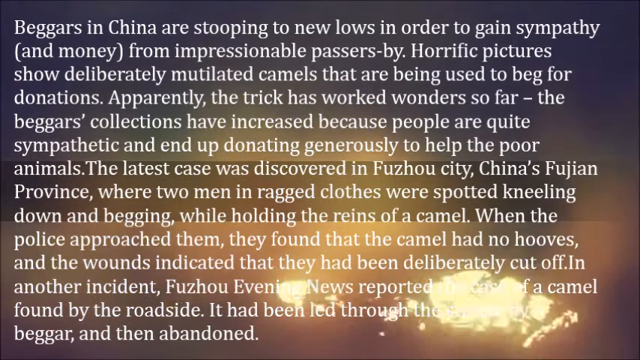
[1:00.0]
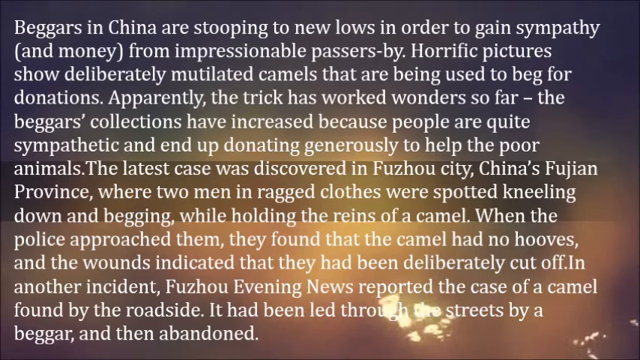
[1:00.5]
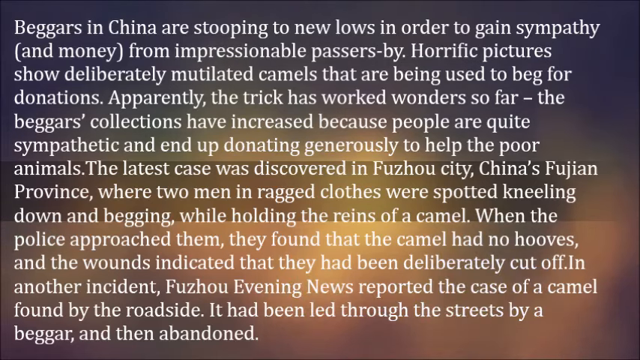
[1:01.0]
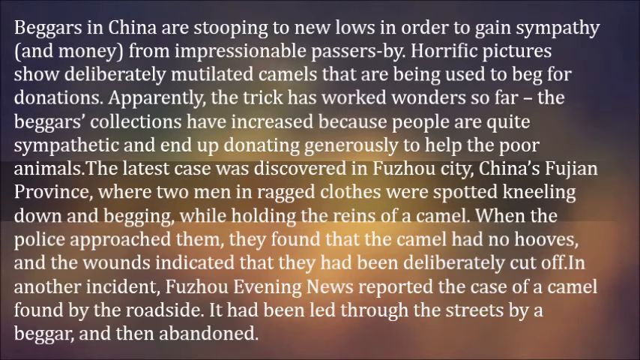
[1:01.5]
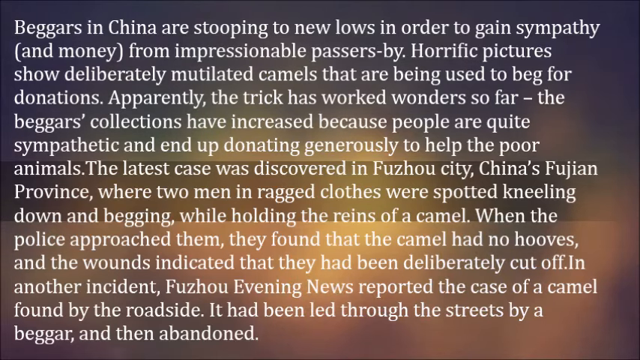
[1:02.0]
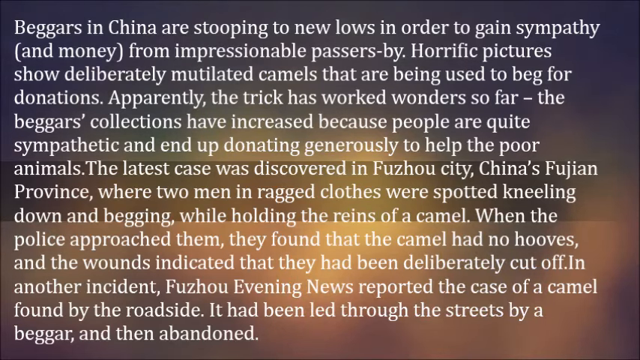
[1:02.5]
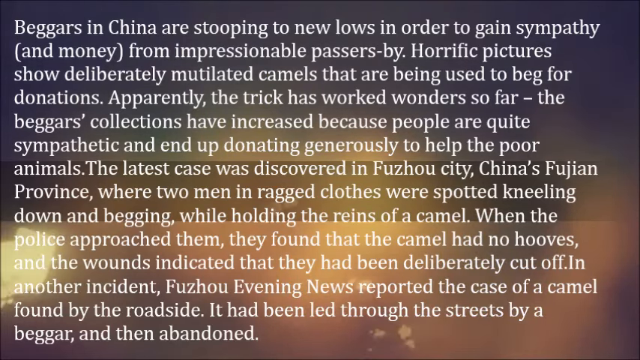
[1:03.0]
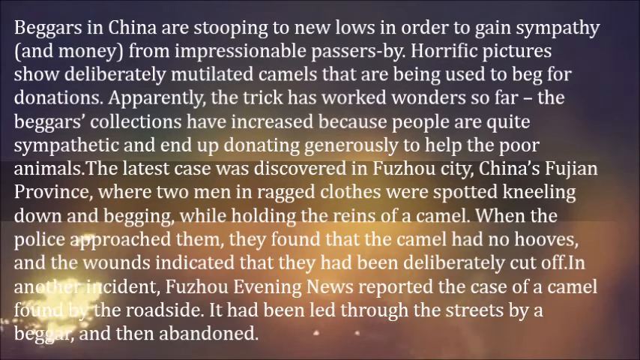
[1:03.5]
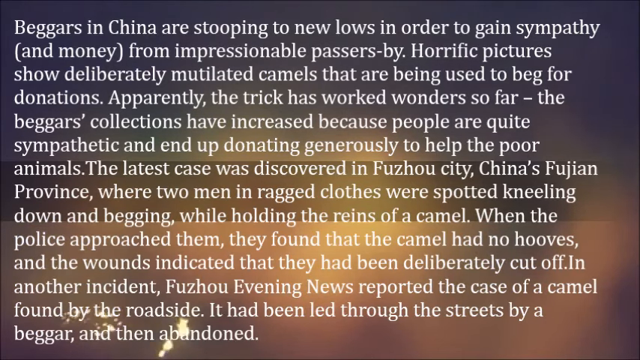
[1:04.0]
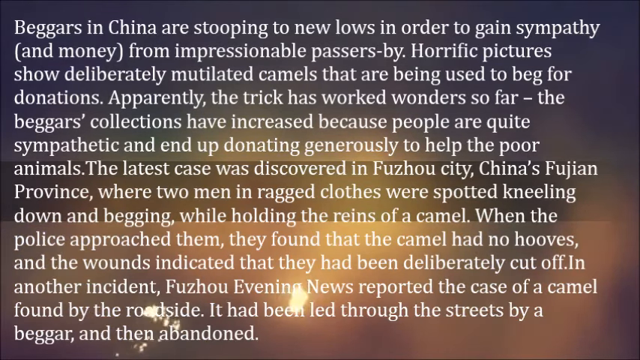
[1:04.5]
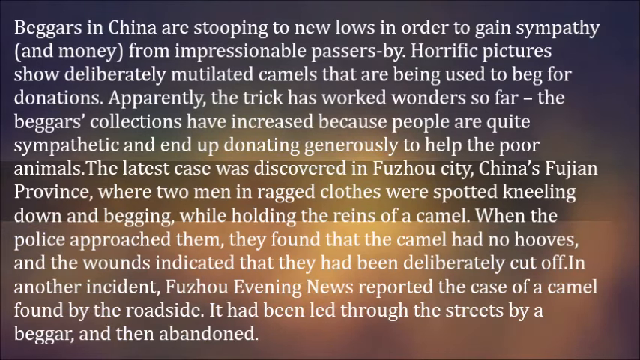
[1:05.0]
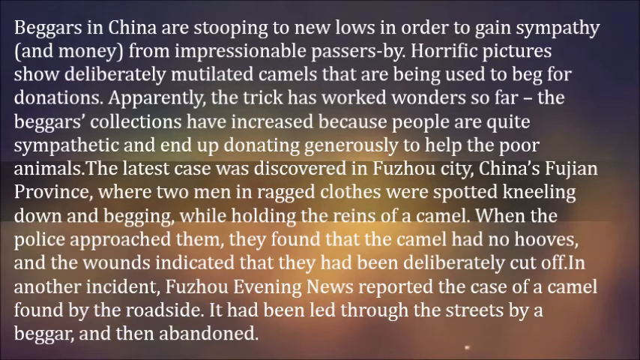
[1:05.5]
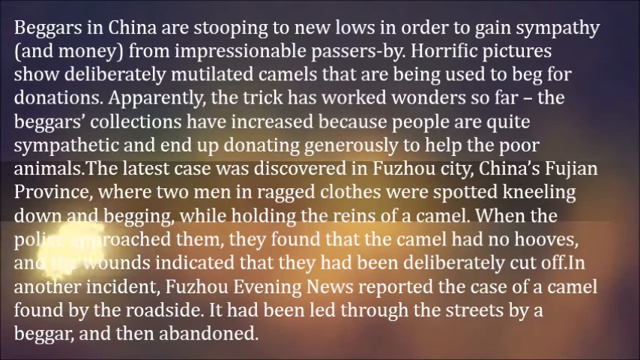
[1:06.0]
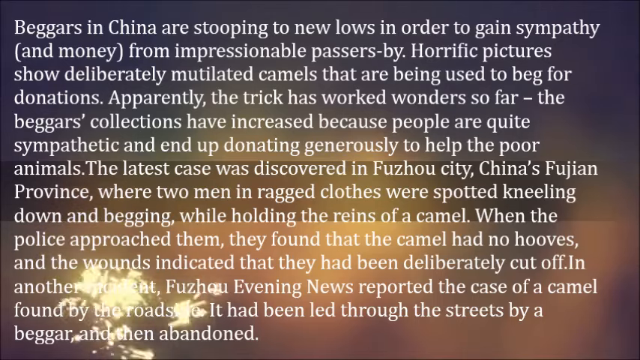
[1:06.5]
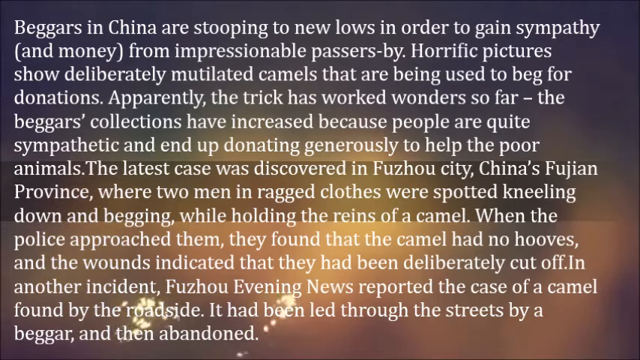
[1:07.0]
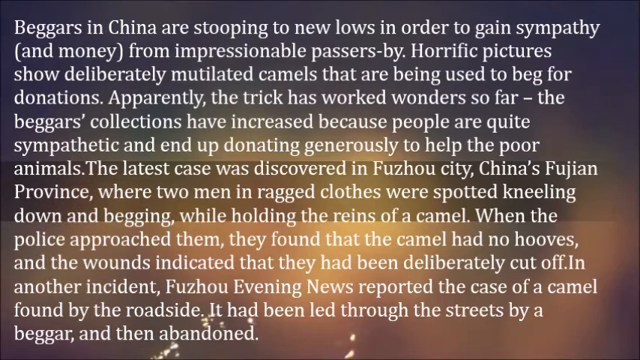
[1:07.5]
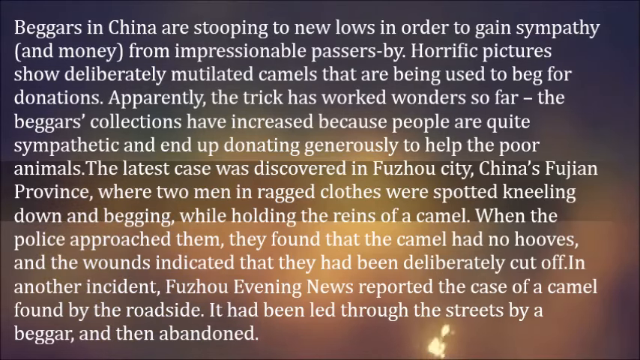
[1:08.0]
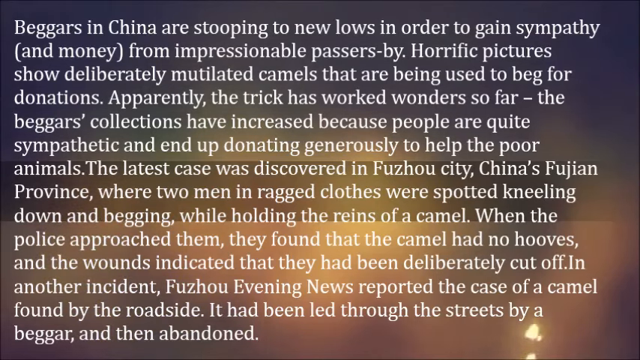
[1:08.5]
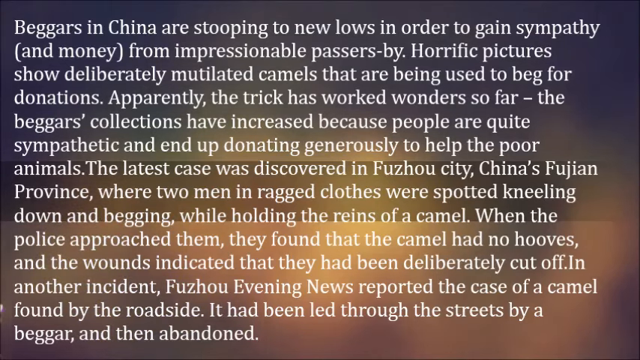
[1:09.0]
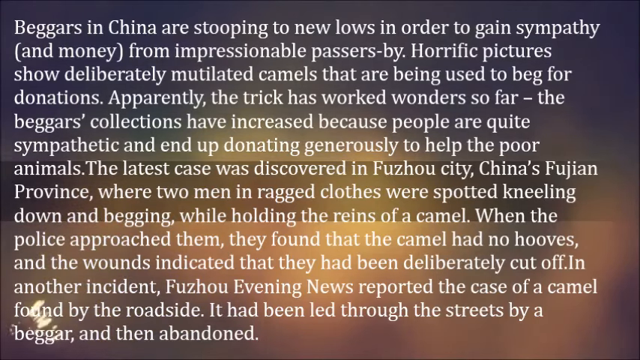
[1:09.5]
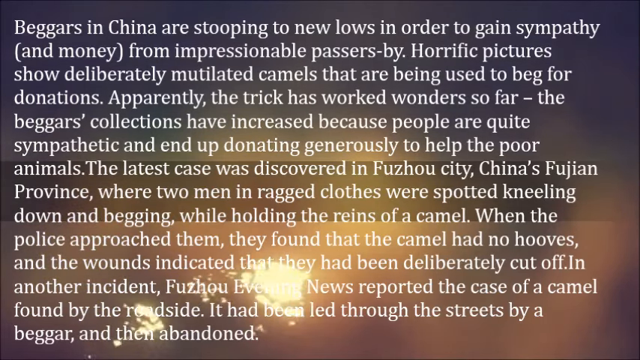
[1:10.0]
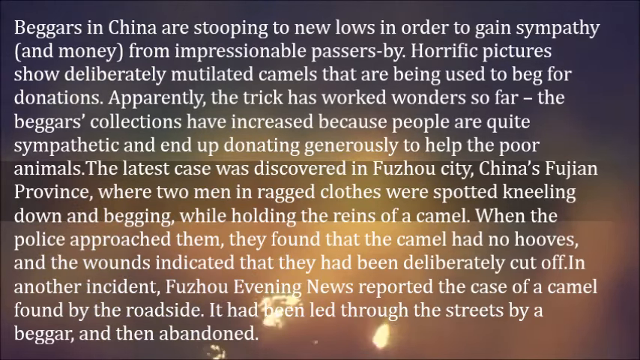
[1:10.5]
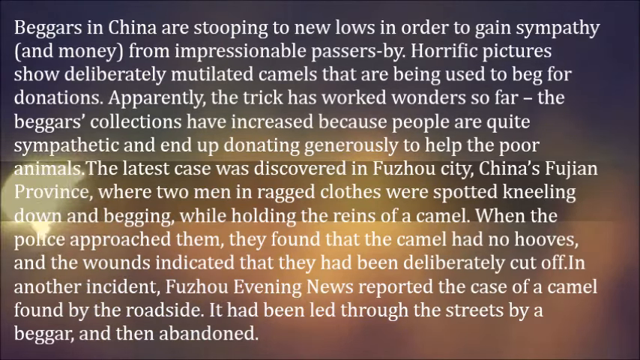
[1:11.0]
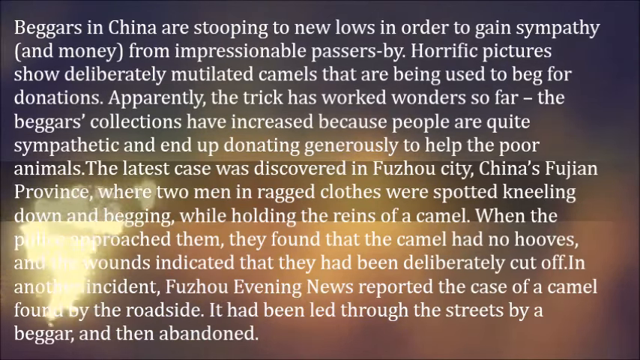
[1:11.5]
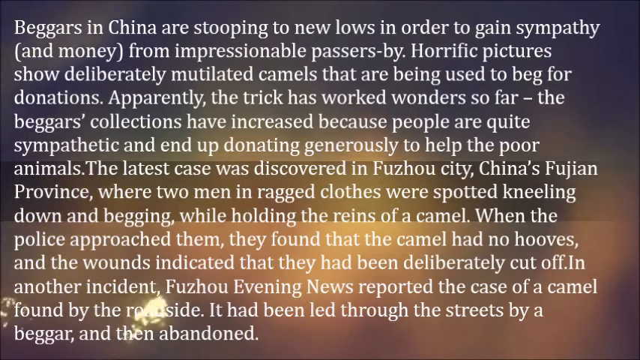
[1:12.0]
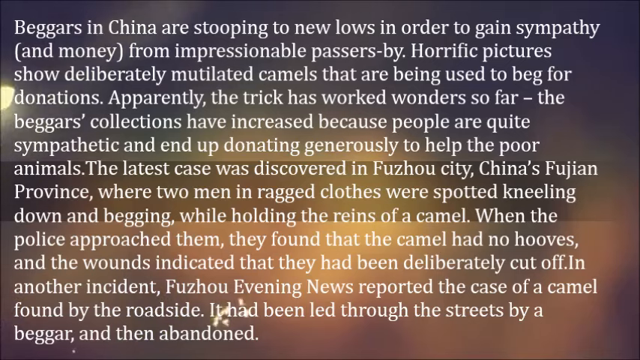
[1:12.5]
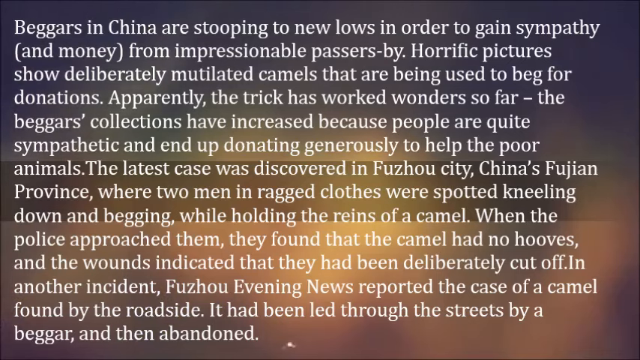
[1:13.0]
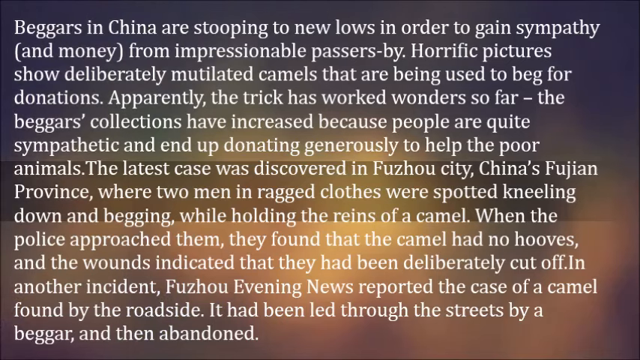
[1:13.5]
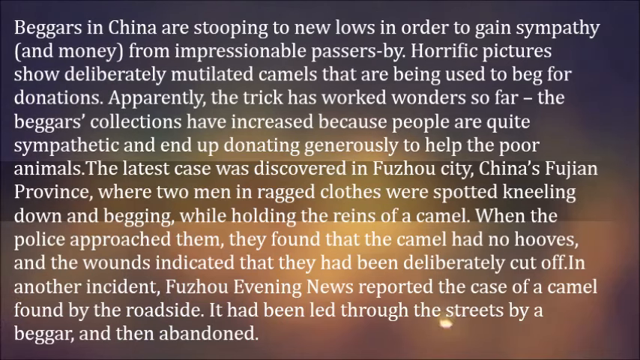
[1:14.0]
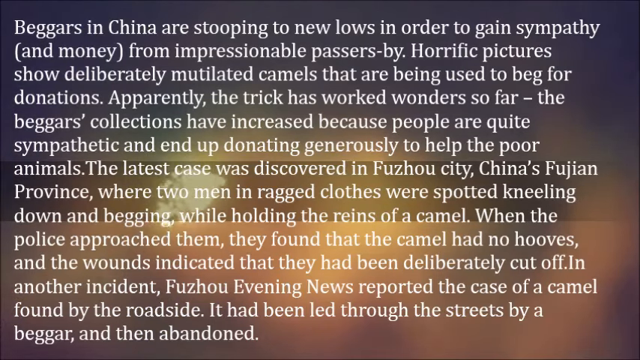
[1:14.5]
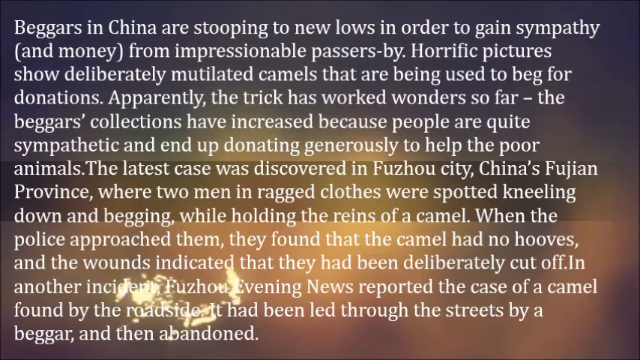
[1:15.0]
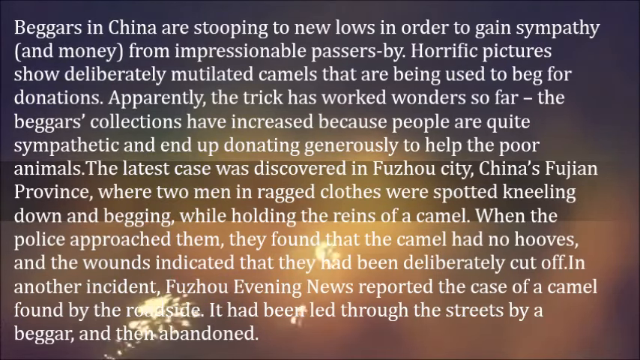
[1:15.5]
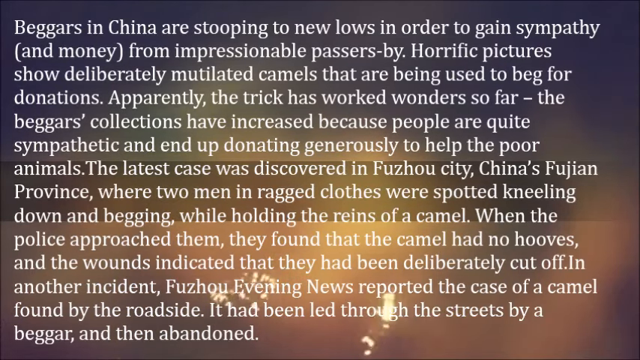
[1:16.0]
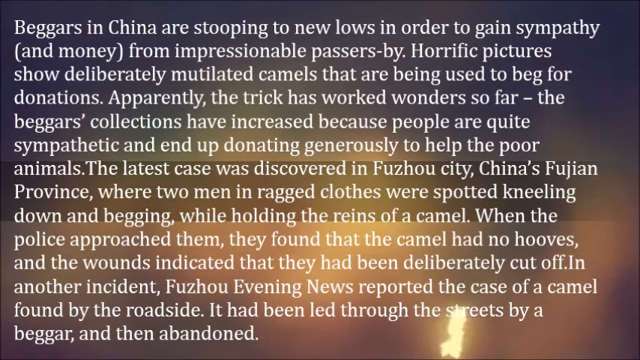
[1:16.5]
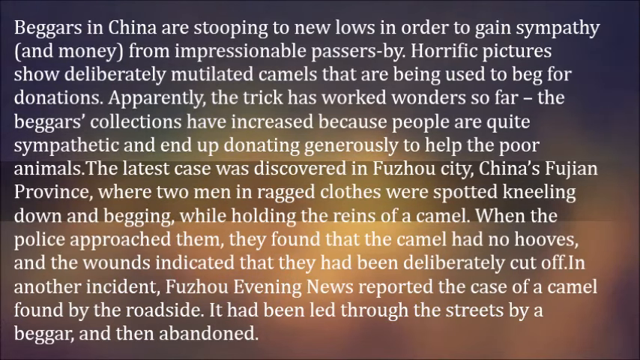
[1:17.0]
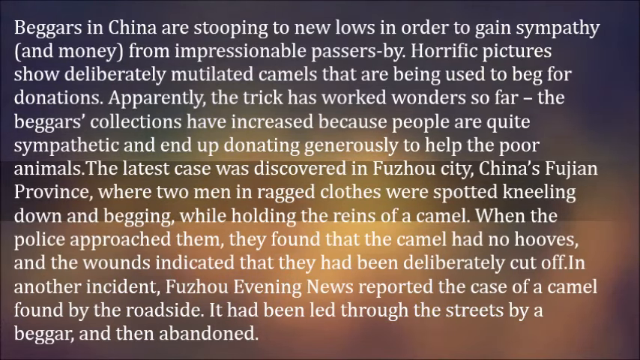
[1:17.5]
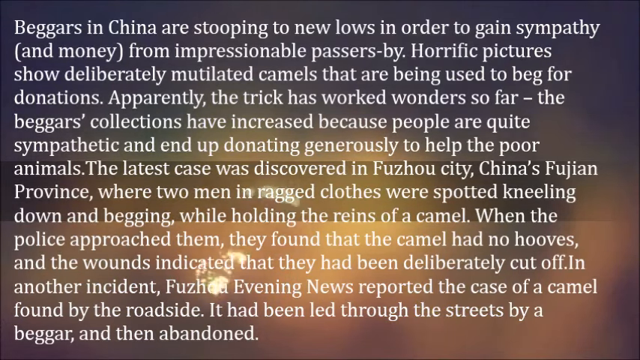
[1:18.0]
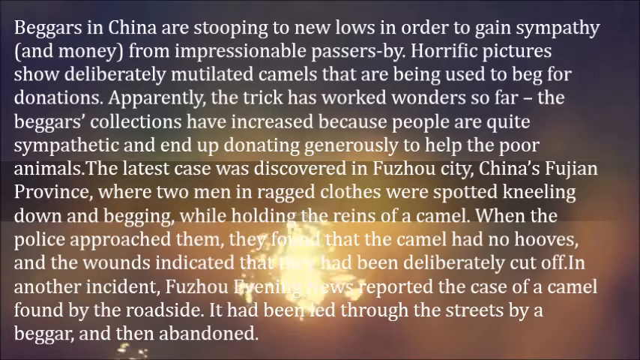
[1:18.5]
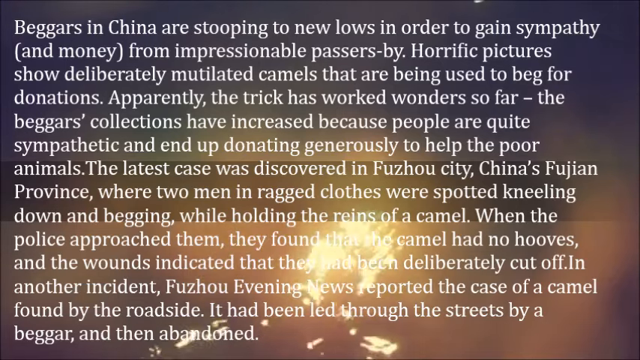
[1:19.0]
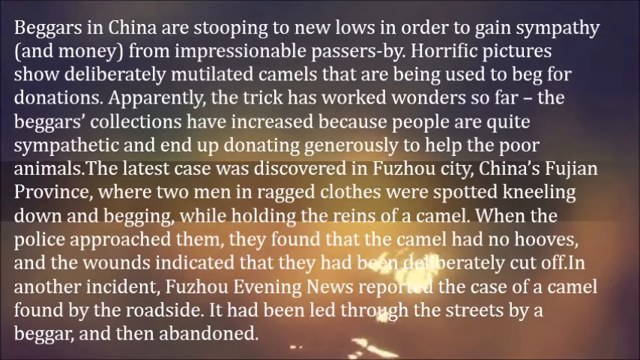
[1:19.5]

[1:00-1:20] The words remain on the screen for the whole segment, describing beggars in China who deliberately injure or mutilate camels to get larger donations from passersby, and mentioning that this is apparently working as their donations are increasing. The story of two men in China using a wounded, mutilated camel to get money from passersby is written on the screen. The font is white, and the screen is crowded with words. The backdrop is various shades of brown and gray, almost black toward the top, and there appear to be glimmers of gold and yellow in the background, giving the impression that the words are cast atop moving water. The water appears to roll from the left side of the screen to the right, while an entire paragraph of multiple sentences stays up.